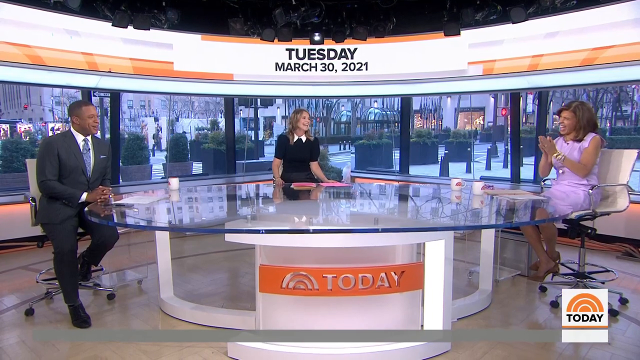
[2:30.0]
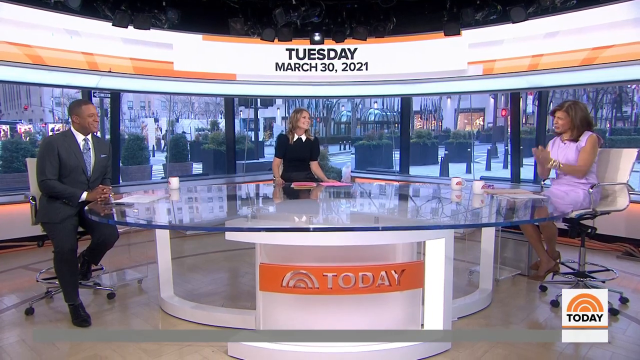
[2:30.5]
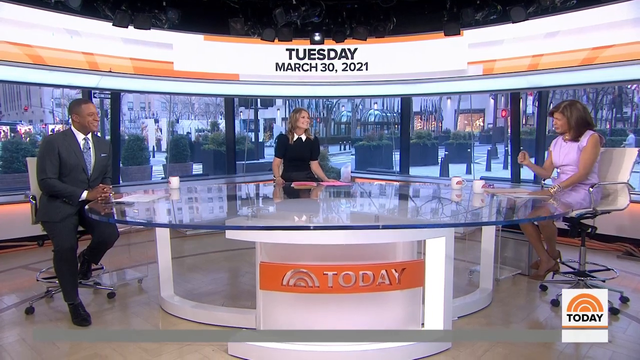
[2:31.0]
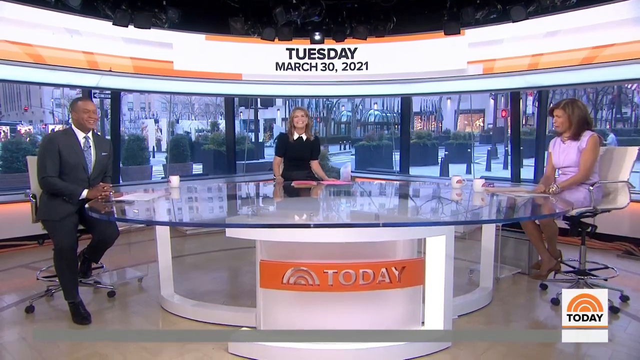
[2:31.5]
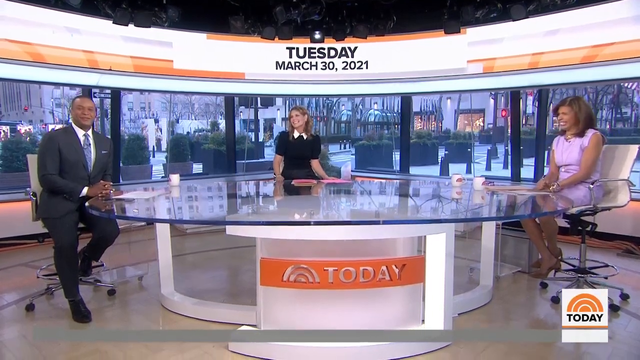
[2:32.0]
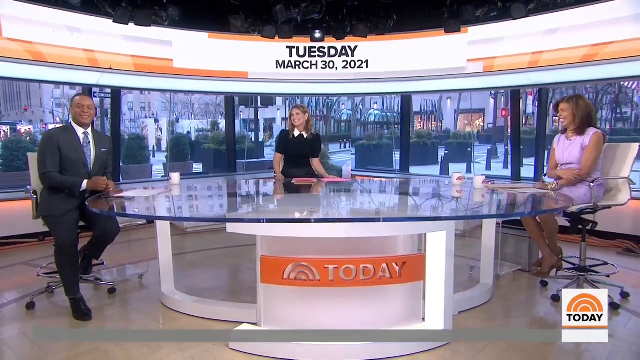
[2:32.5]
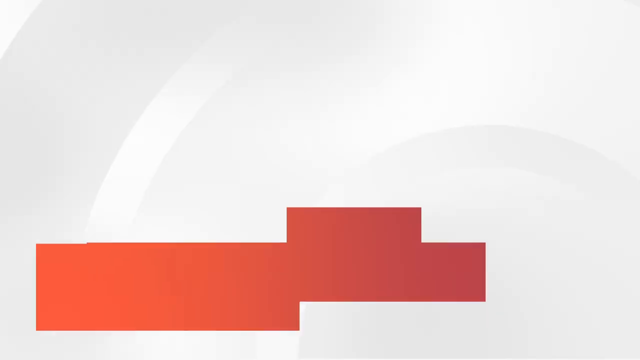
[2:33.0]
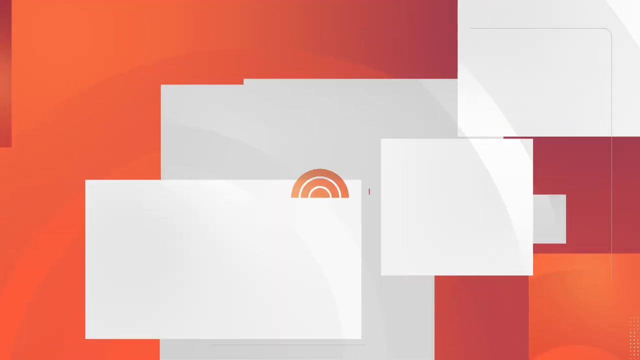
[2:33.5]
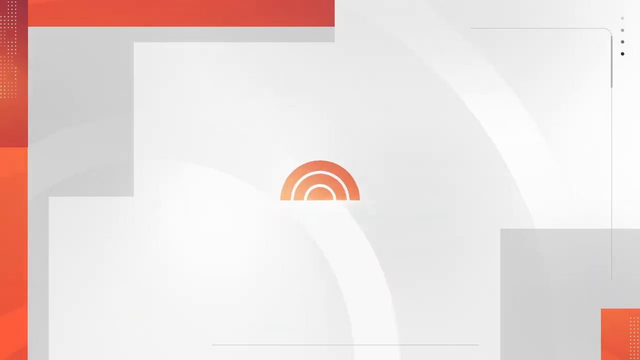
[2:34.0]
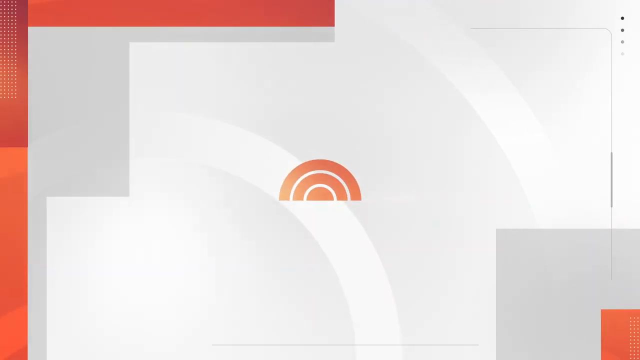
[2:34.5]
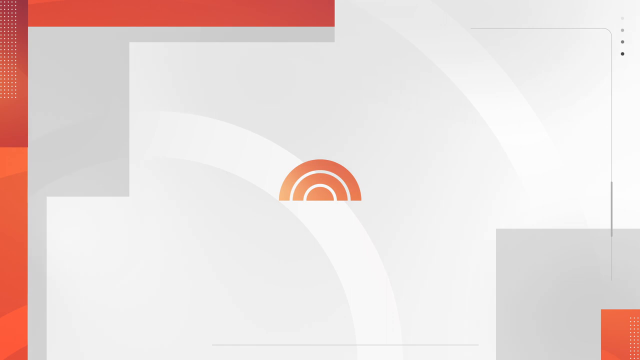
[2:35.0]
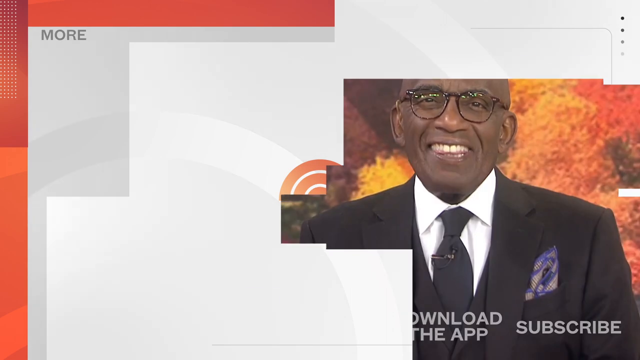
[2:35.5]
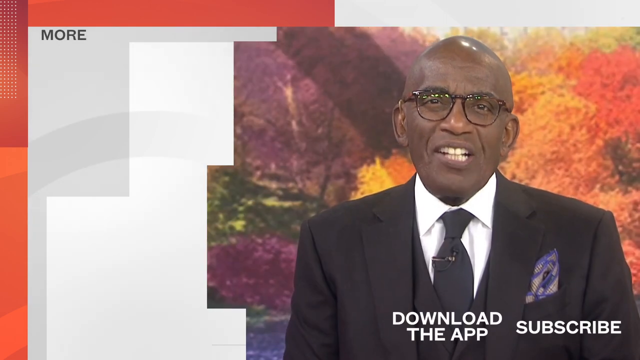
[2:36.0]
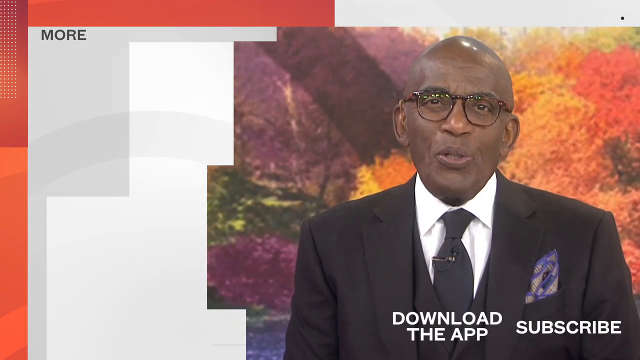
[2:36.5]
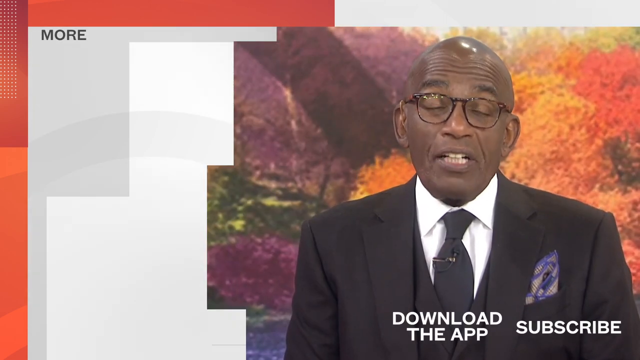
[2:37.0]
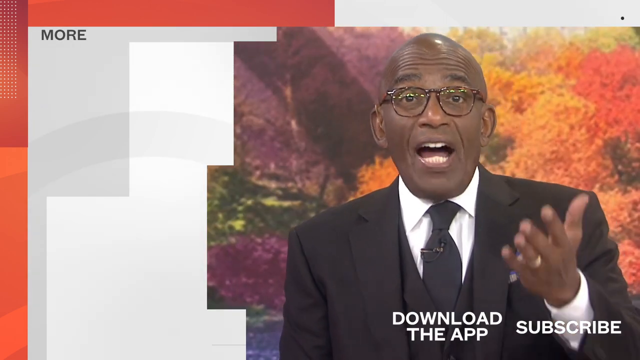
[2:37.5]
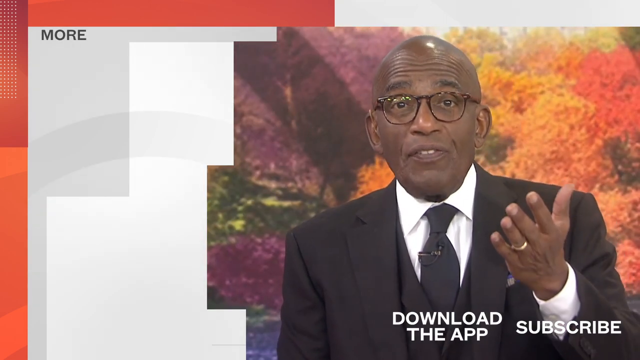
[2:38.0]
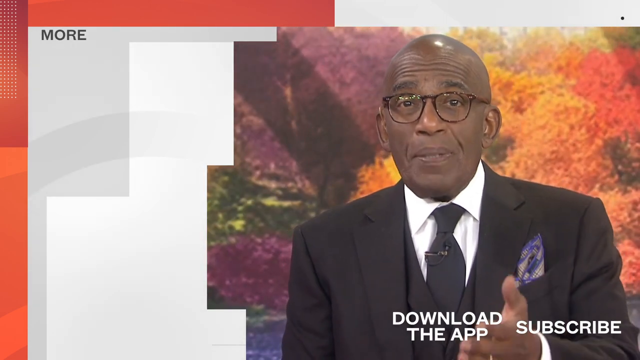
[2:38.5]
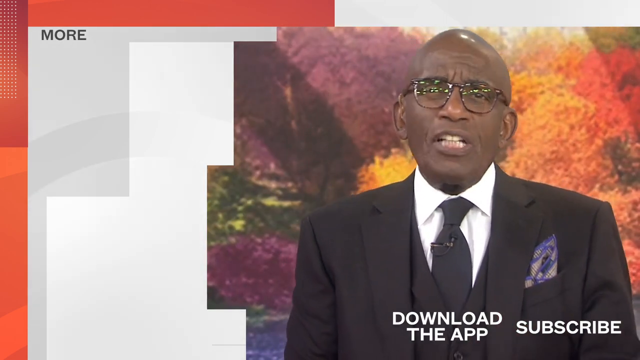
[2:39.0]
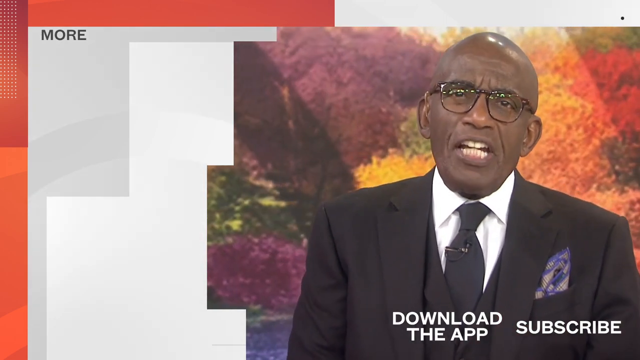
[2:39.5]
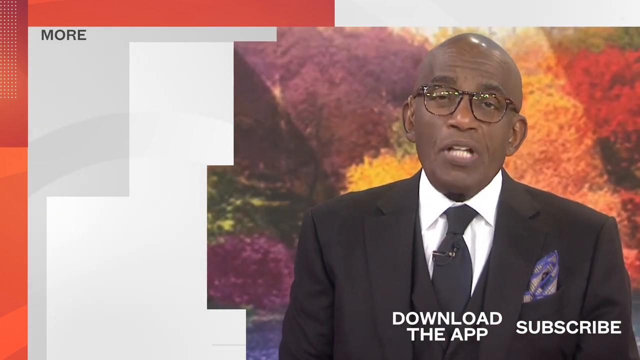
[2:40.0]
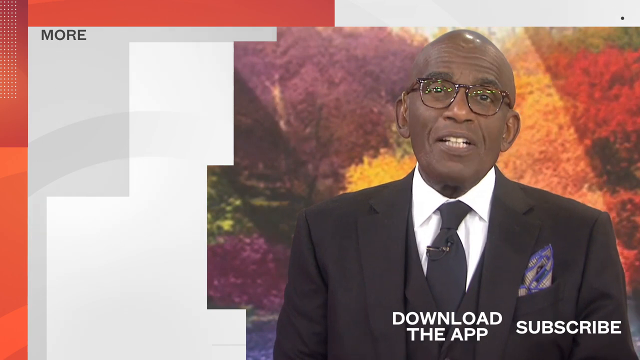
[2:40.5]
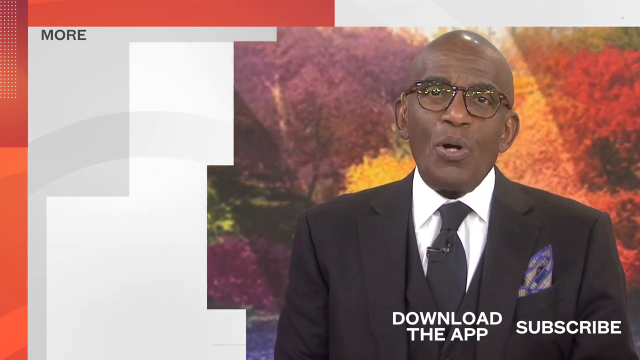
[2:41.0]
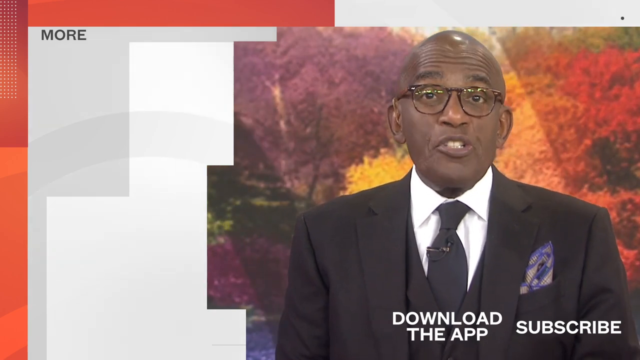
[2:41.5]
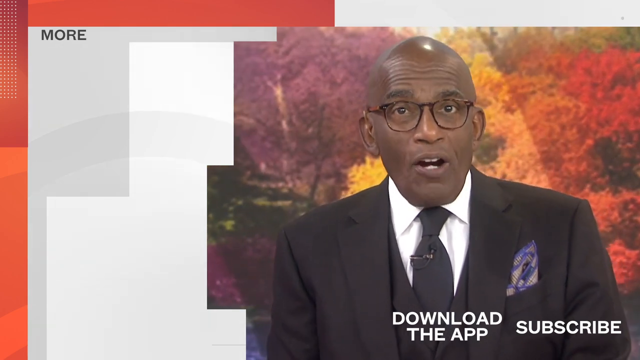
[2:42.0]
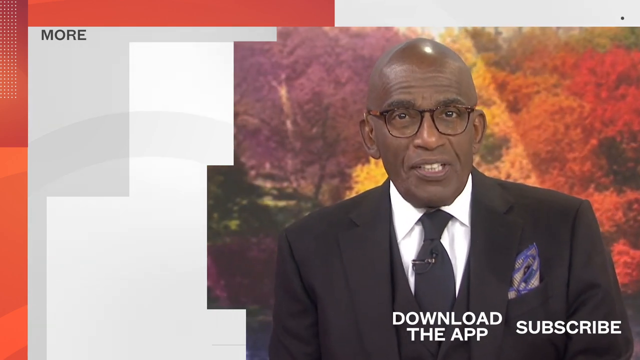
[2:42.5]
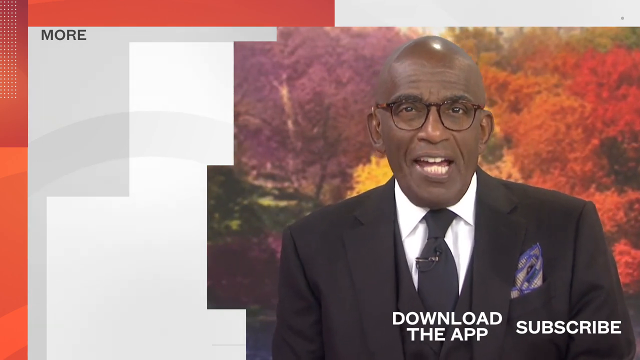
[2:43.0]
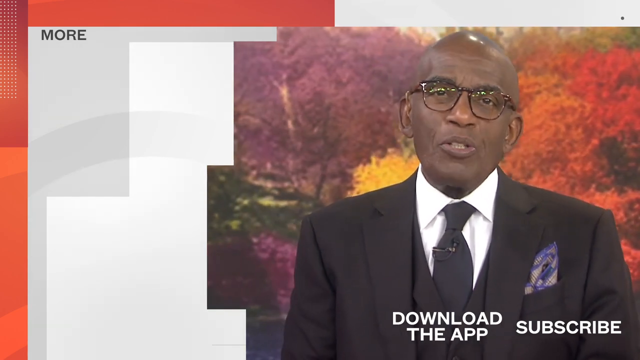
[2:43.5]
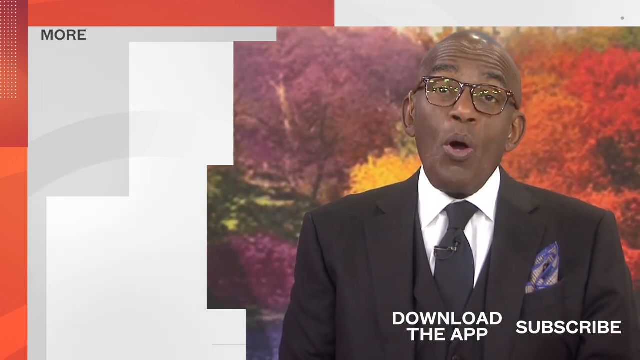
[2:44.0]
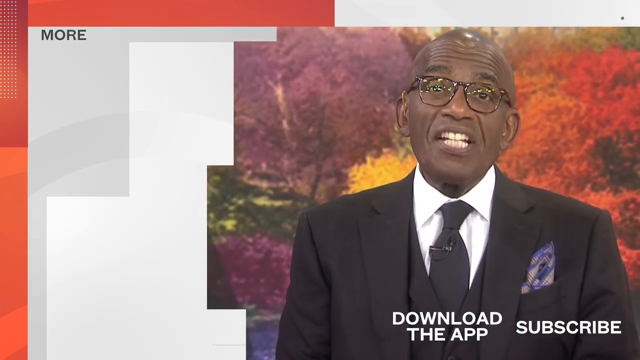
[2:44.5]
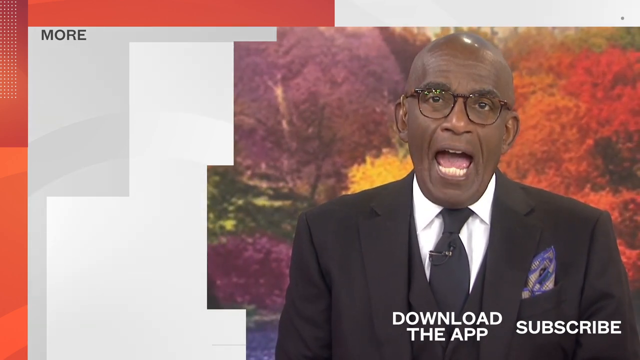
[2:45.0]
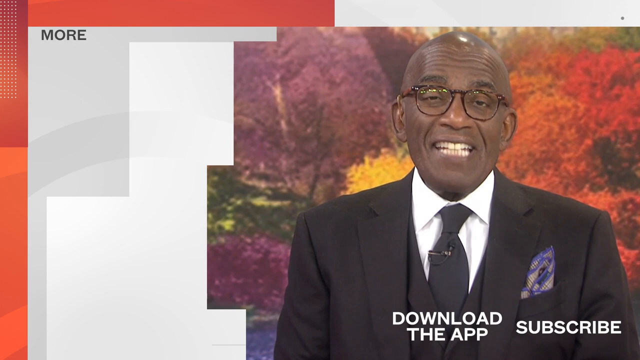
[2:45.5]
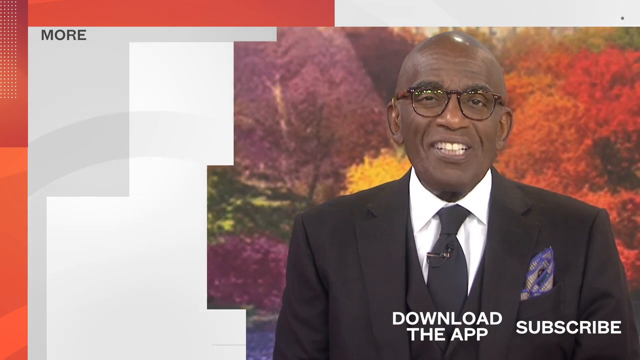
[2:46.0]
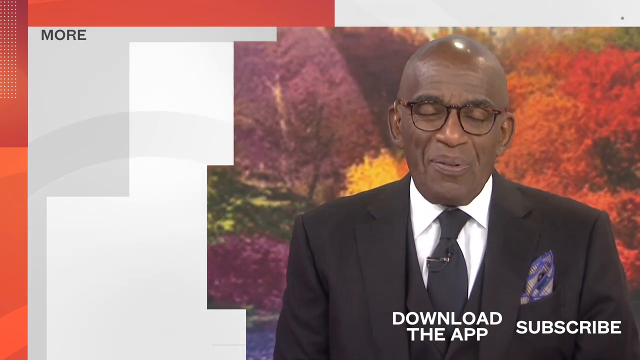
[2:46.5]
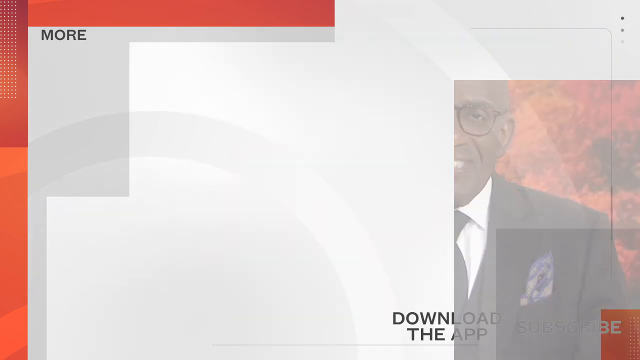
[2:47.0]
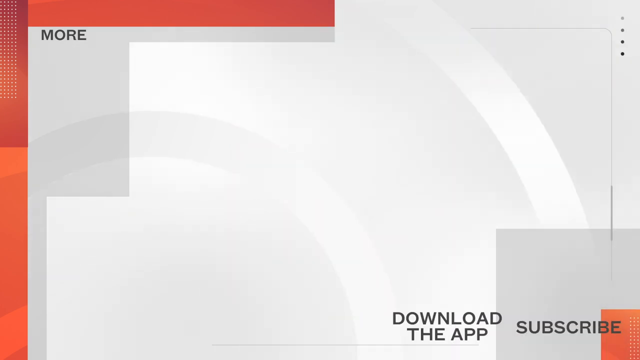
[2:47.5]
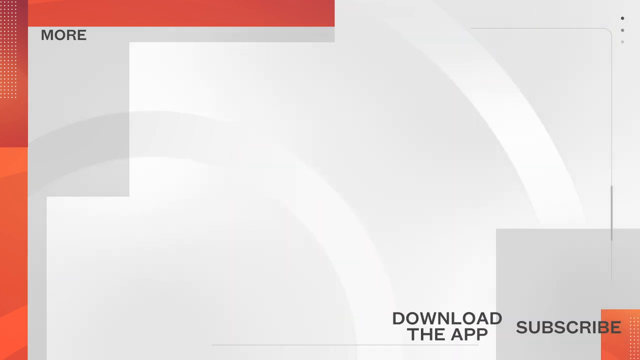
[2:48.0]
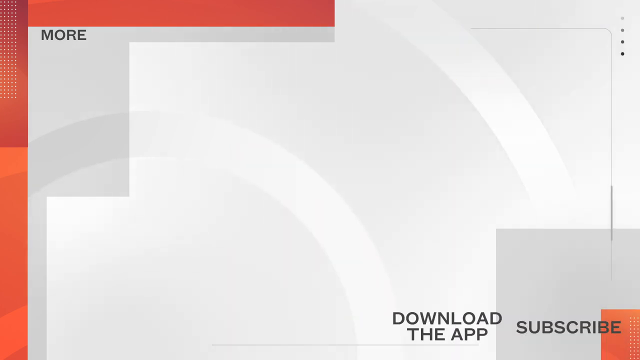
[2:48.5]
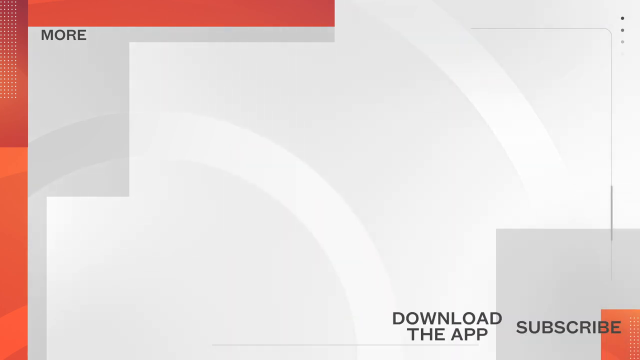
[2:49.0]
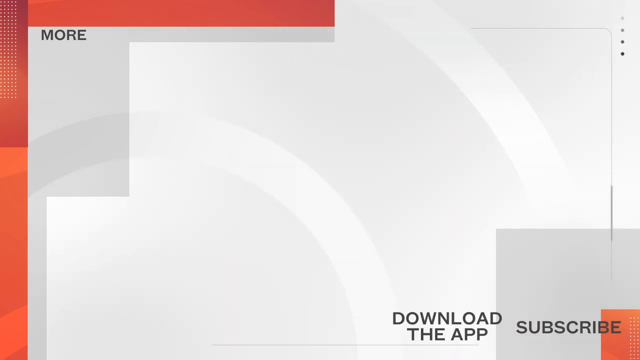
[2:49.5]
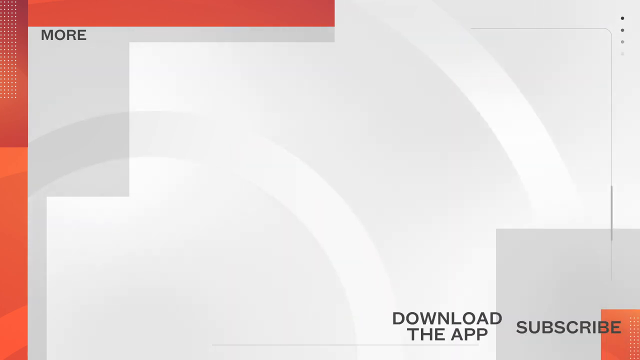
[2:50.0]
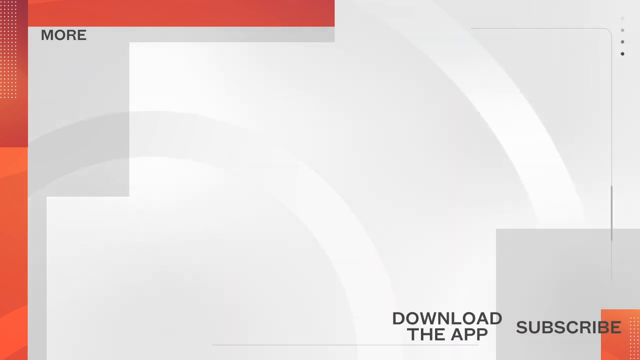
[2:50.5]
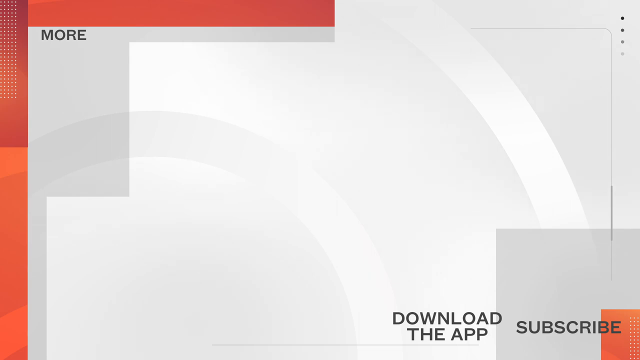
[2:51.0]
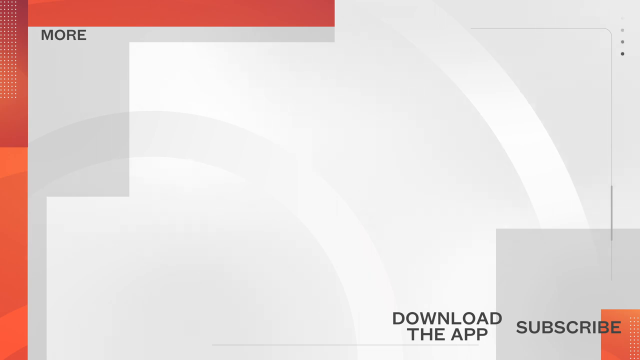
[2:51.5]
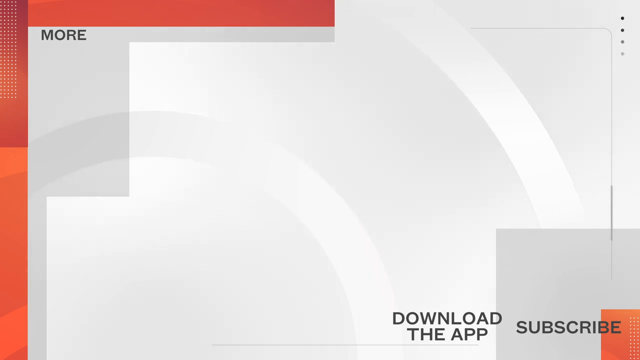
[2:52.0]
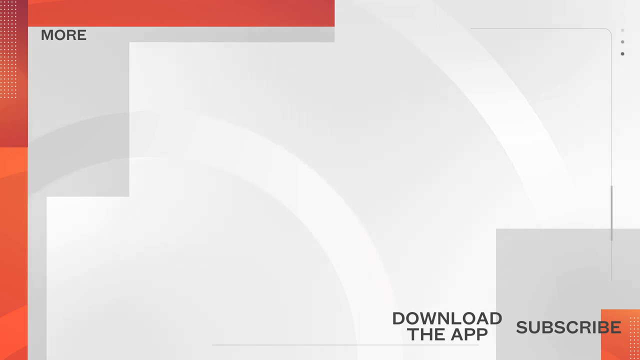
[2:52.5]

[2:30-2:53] The woman reporter on the right in the purple dress talks, making hand motions with her right hand, then grips her left forearm near the wrist with her right hand. A closing screen appears: a mix of white and gray, with orange-red borders along the left side and half of the top, and the Today News logo in the center. The camera then cuts to a very colorful background with a male reporter in a black suit and glasses, who talks into the camera; he has a darker skin complexion and is bald. Text below reads "download the app and subscribe" in white. The man keeps speaking into the camera, then disappears, leaving only the background screen until the video ends.